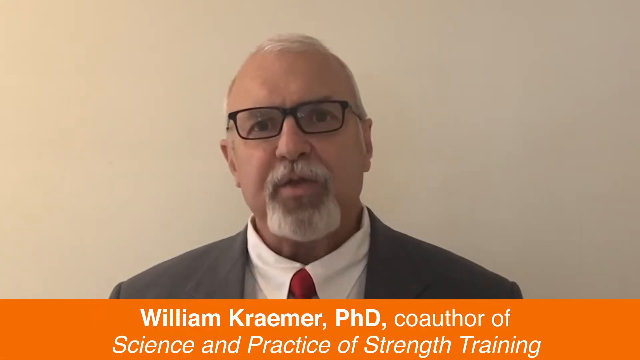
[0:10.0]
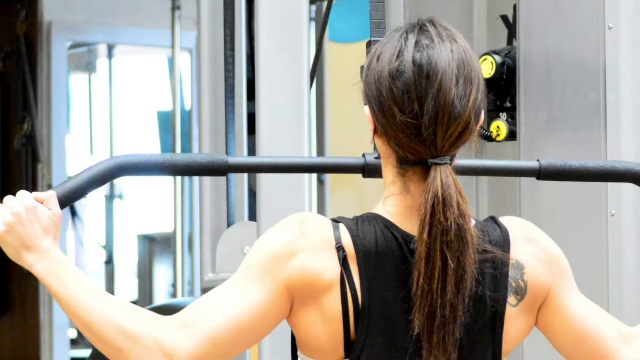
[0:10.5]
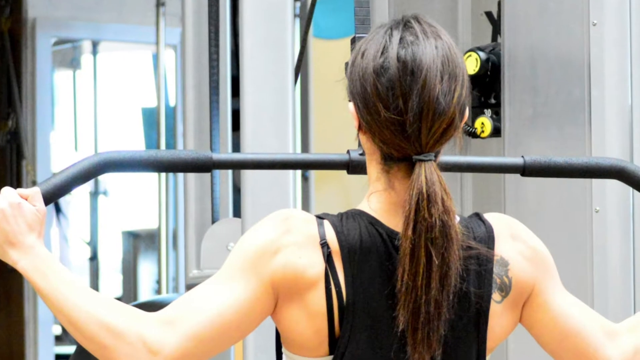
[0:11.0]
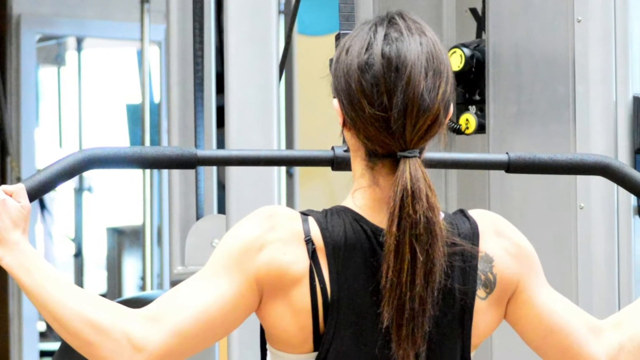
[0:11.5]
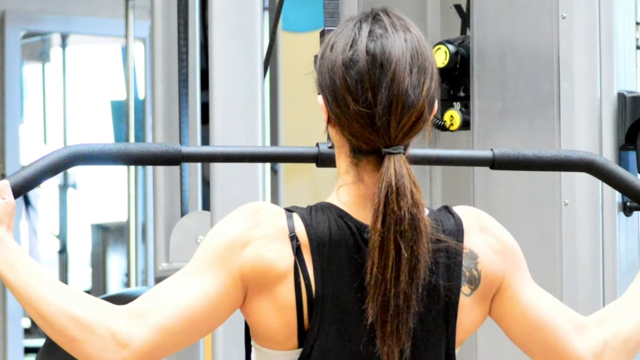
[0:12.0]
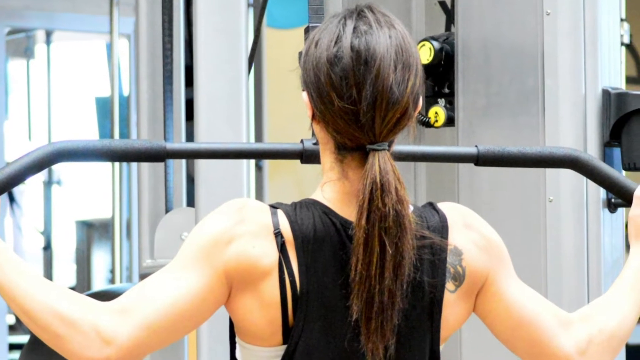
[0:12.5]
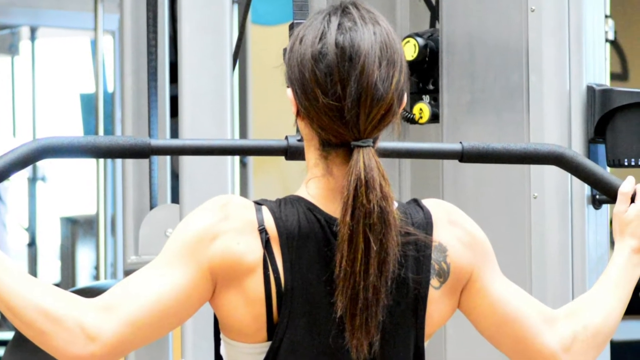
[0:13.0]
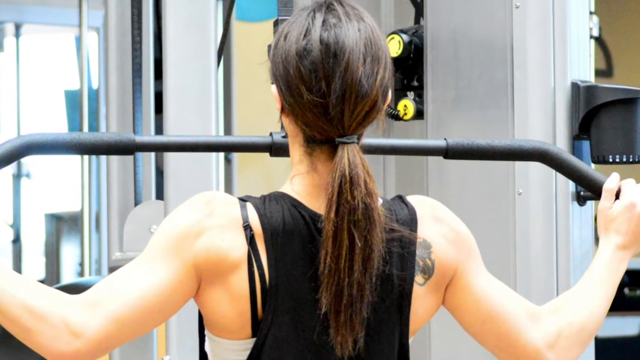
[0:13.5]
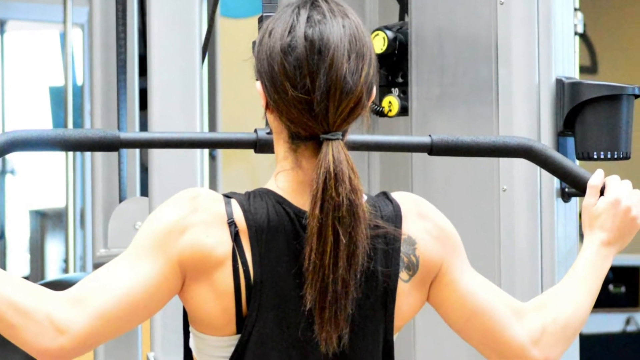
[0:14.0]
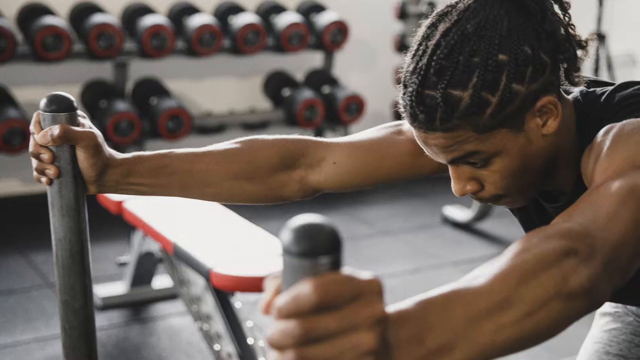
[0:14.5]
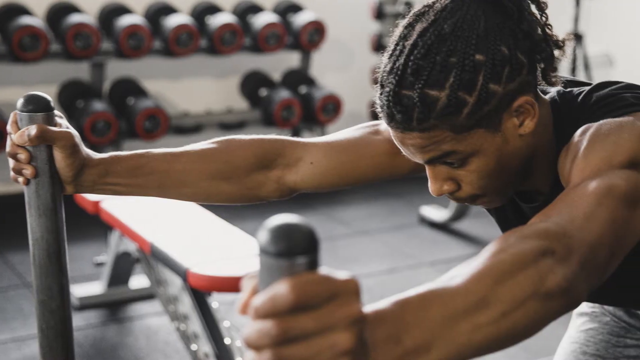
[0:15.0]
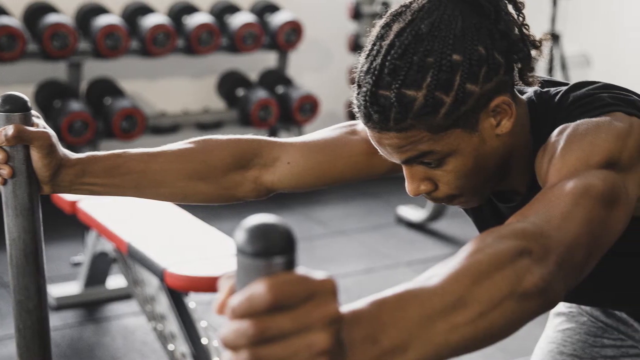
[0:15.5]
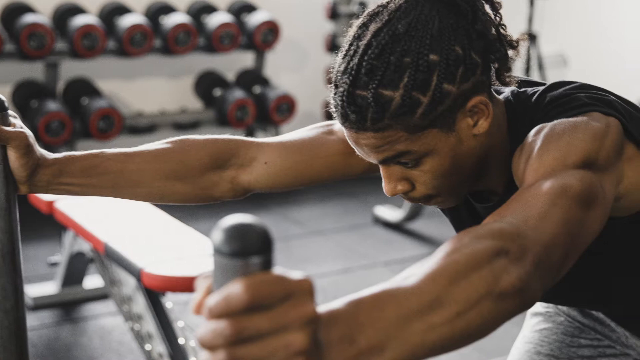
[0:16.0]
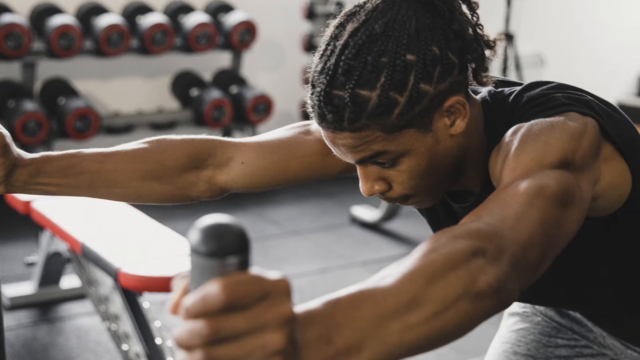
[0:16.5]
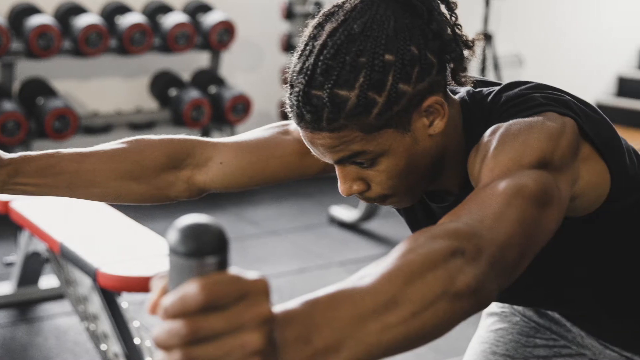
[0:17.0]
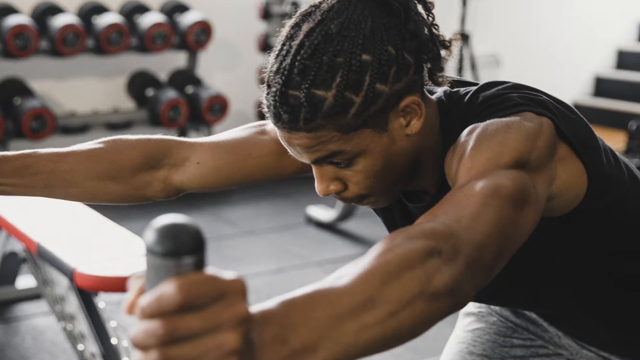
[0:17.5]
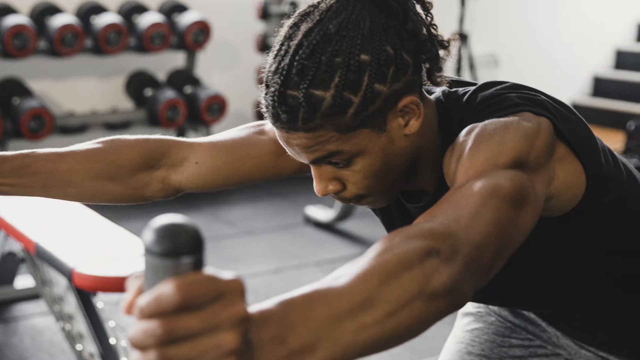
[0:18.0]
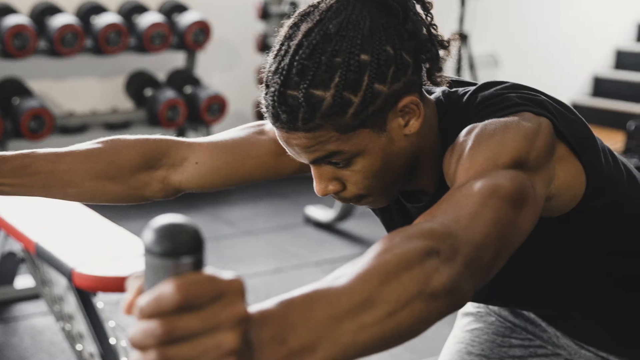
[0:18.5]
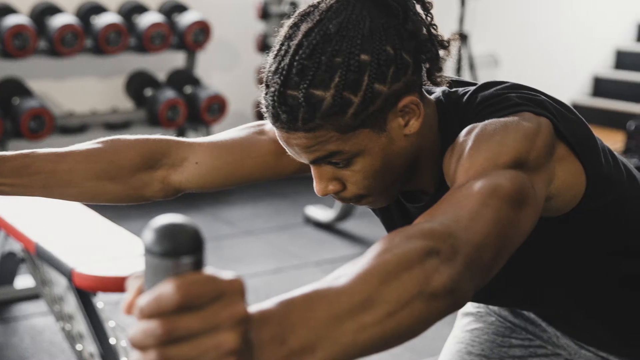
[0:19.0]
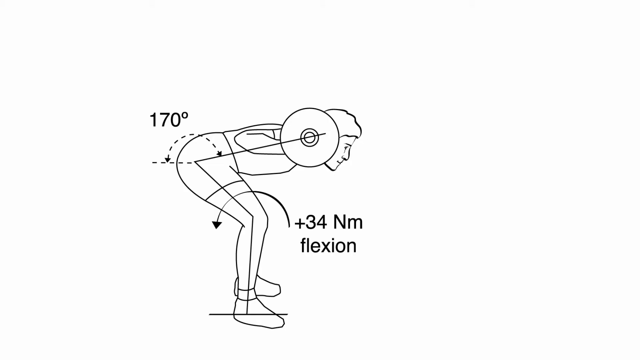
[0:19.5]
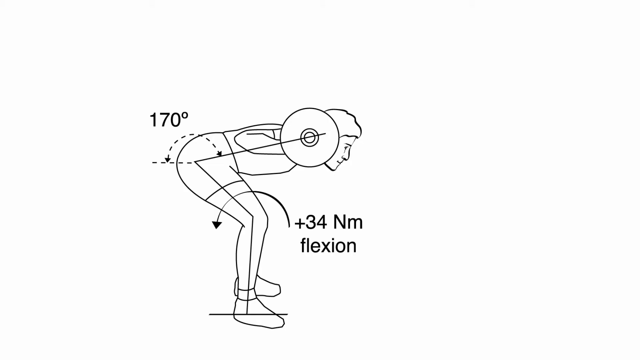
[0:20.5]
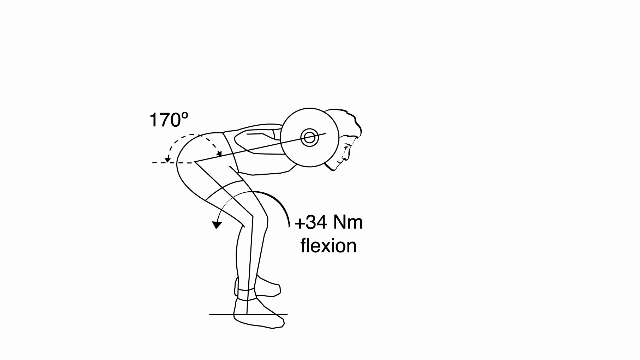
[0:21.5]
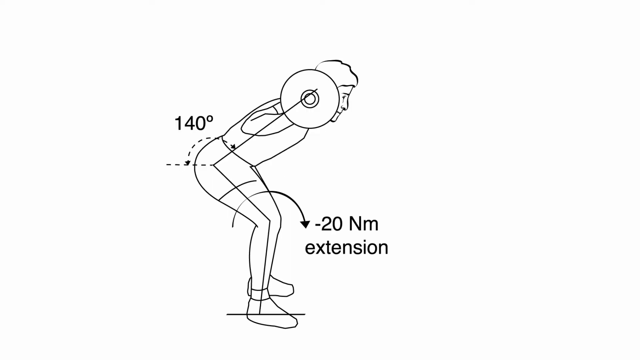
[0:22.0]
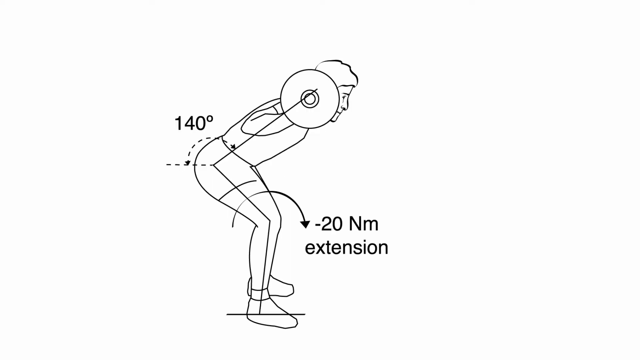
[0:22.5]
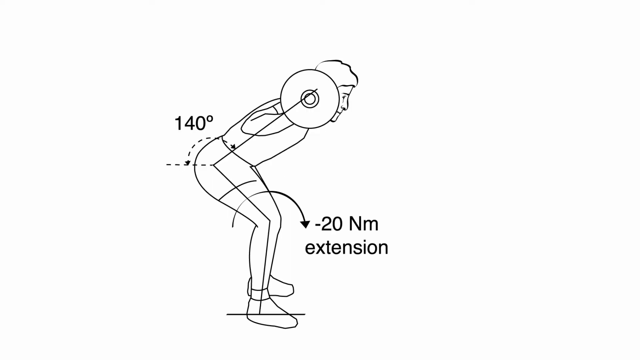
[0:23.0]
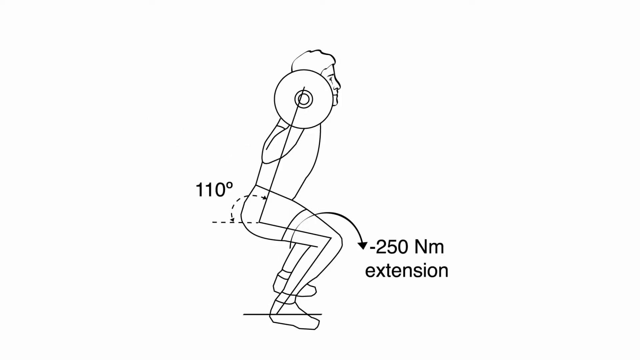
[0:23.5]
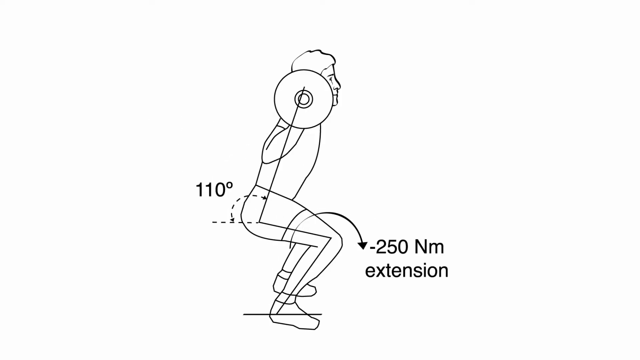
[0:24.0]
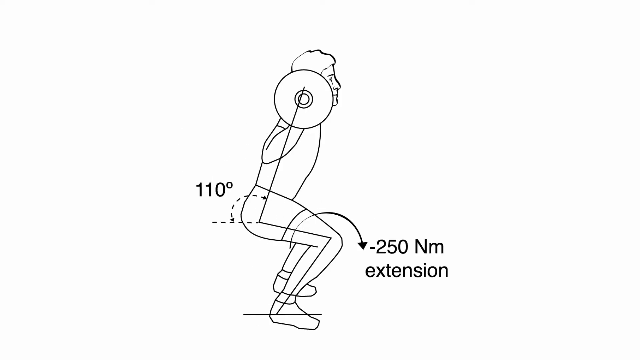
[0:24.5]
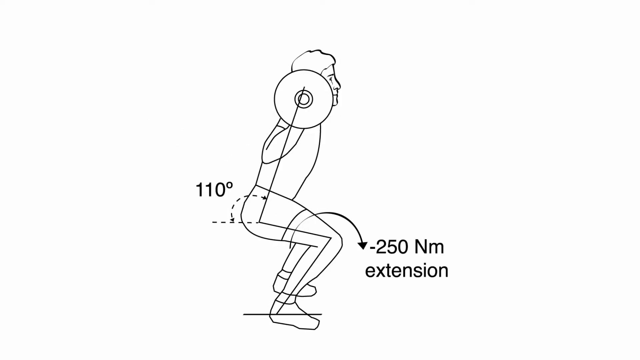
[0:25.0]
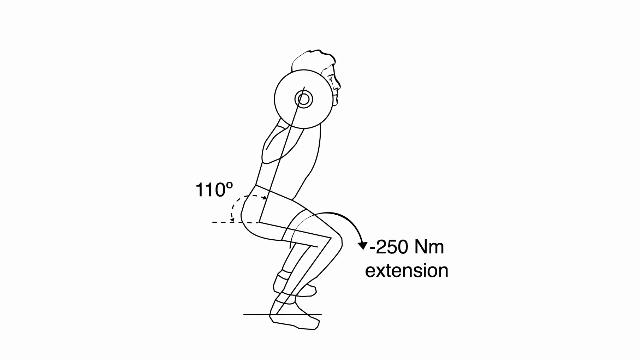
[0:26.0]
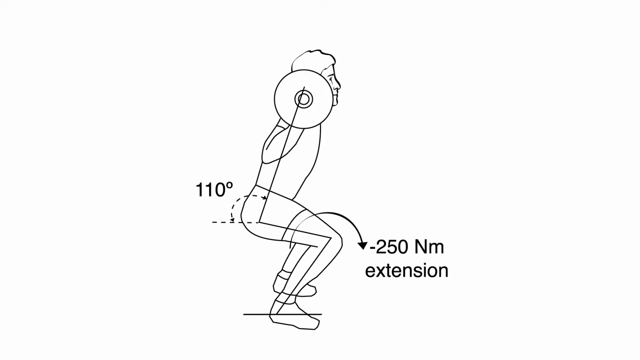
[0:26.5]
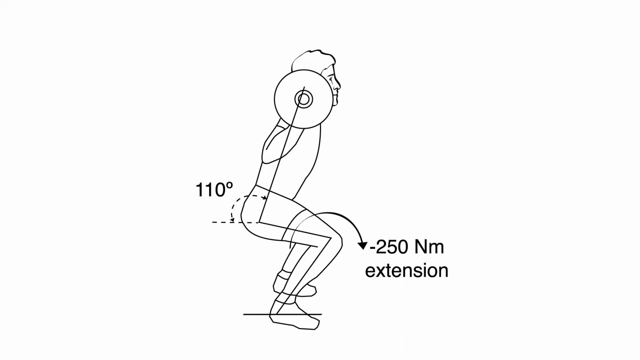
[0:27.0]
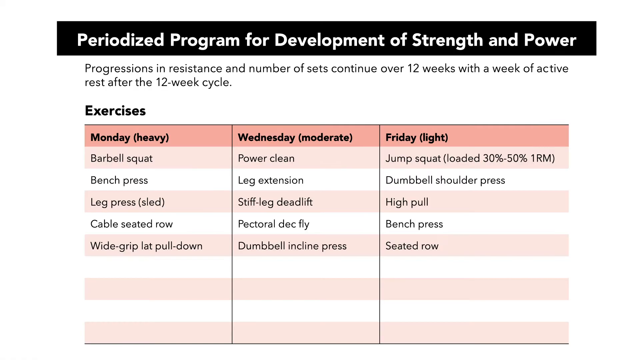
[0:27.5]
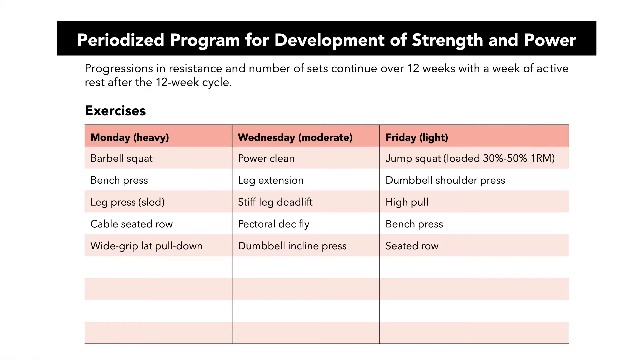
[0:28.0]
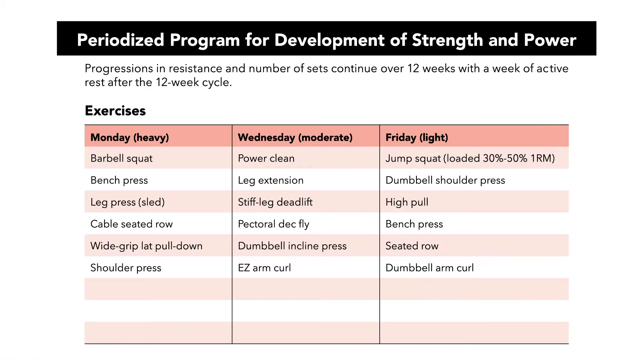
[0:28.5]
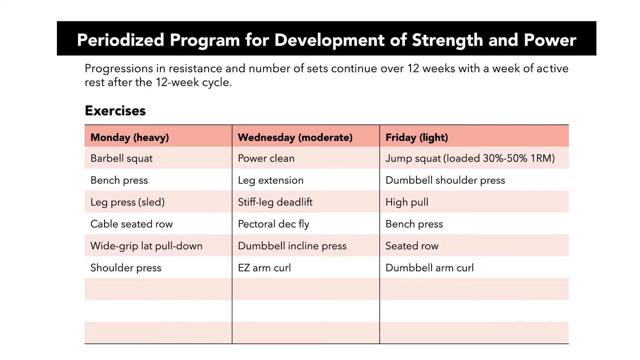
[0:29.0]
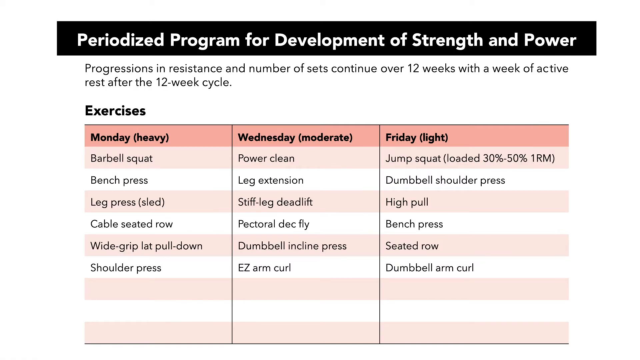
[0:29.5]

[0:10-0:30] An image shows a woman from behind doing strength training. She holds on to bars, has a ponytail, and is kind of in a gym room, and the camera kind of pans to the right across the image. Another image shows a person with braids, dreads, in his hair, sort of facing left with both hands on bars; he looks kind of like he is concentrating, and many barbells are in the background on the left of the gym room. Next comes a white diagram with a drawing of a person holding a sort of barbell kind of on their neck. A sort of degree reading shows 170 degrees, with a sort of arrow around the waist, and below that "plus 34 nm flexion" appears kind of around the knee. The figure moves up slightly and the numbers change, then moves backward; the number around his waist reads 110 degrees, and "minus 250 nm extension" appears sort of around the knees. Then a sort of diagram reads "periodized program for development of strength and power," with a chart labeled "exercises" listing different exercises on different days of the week.